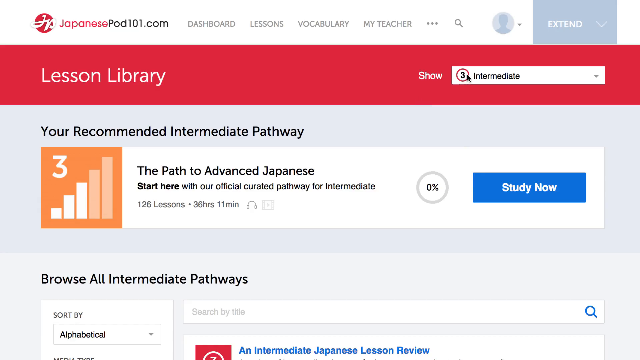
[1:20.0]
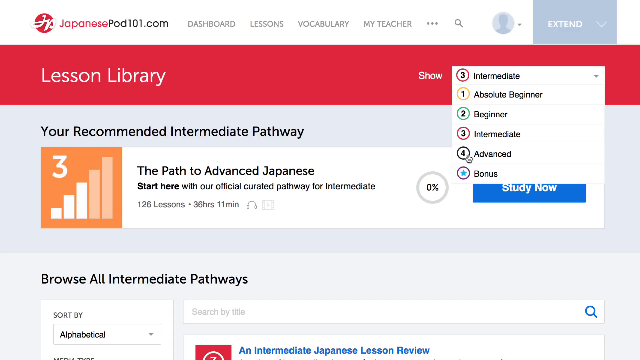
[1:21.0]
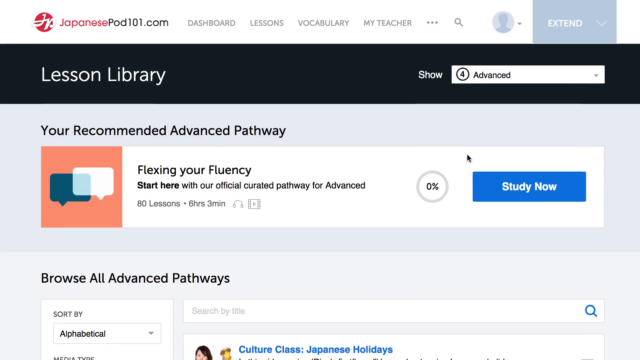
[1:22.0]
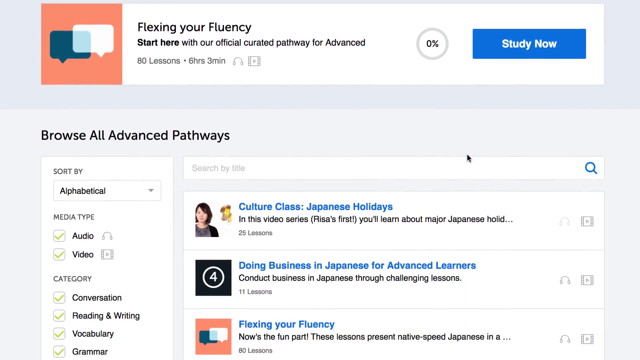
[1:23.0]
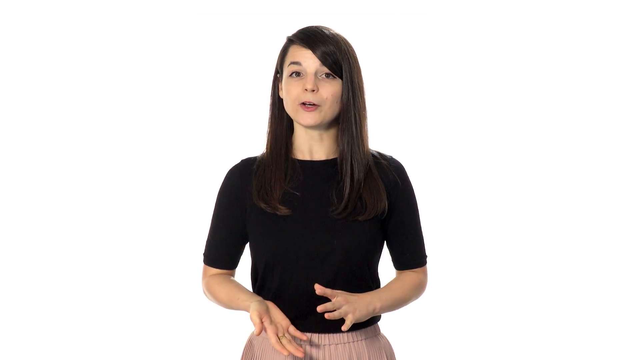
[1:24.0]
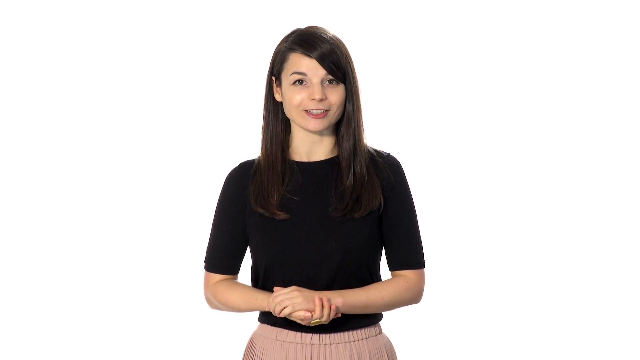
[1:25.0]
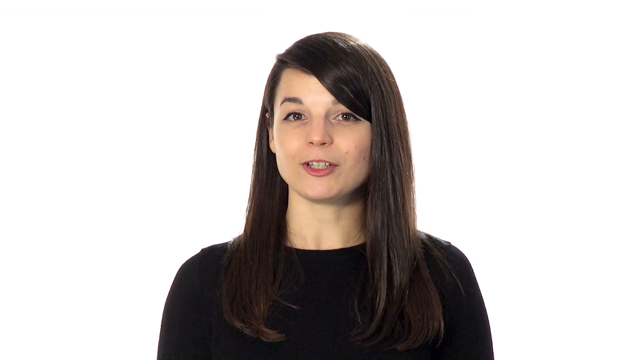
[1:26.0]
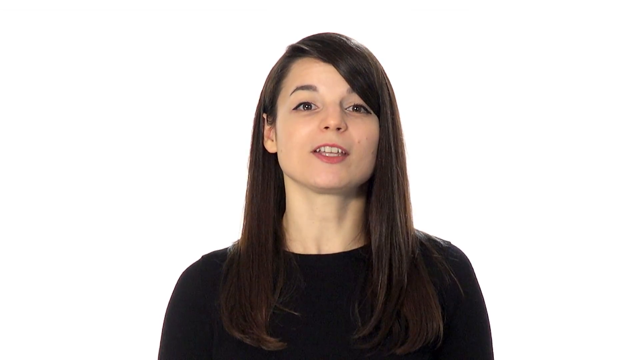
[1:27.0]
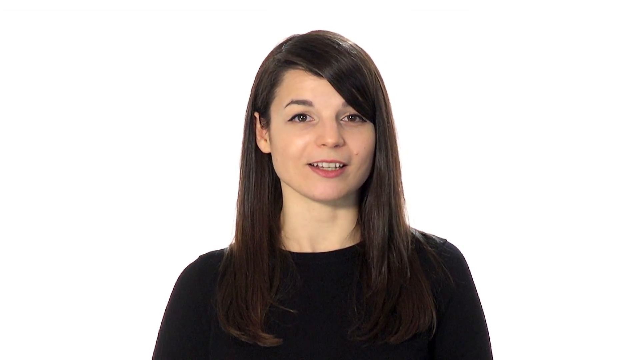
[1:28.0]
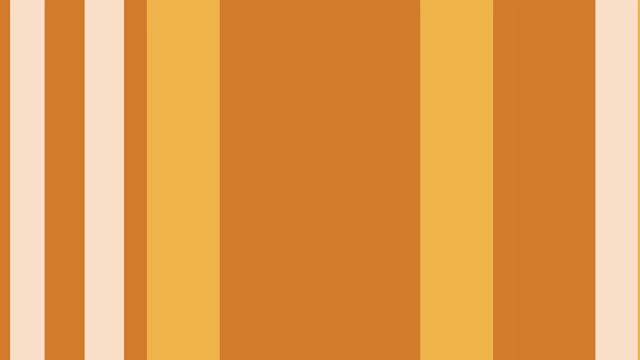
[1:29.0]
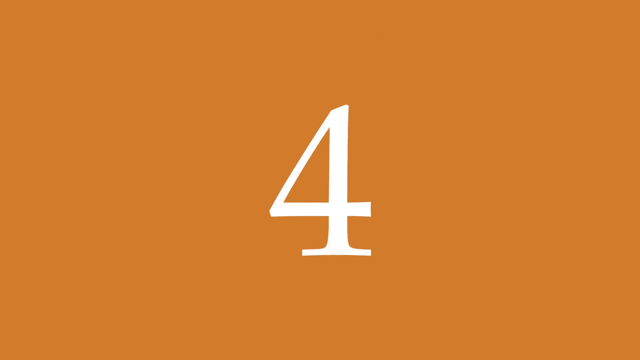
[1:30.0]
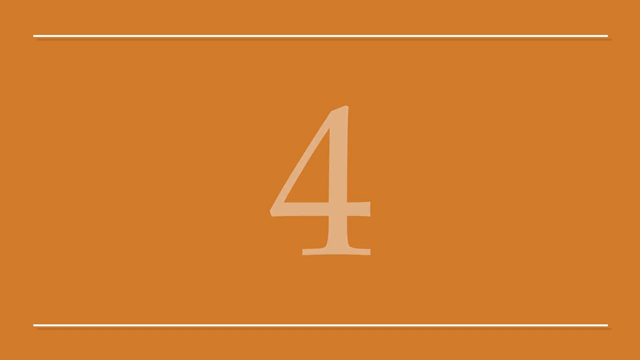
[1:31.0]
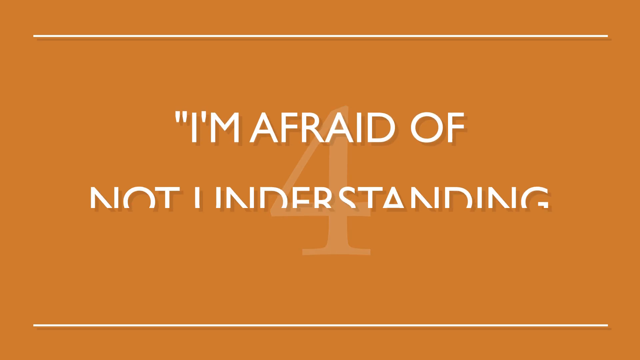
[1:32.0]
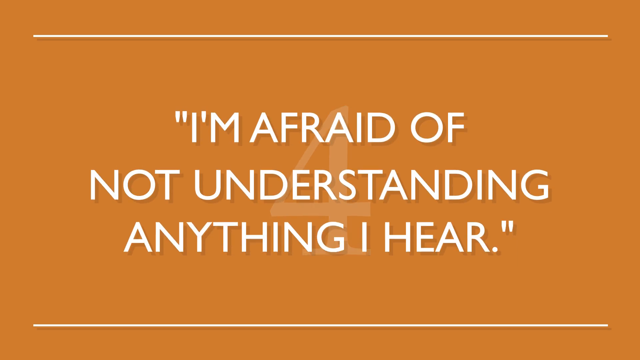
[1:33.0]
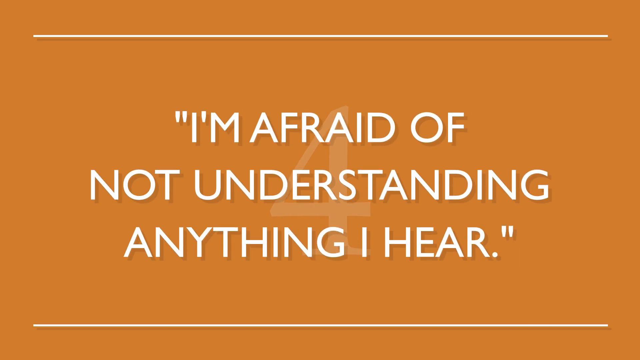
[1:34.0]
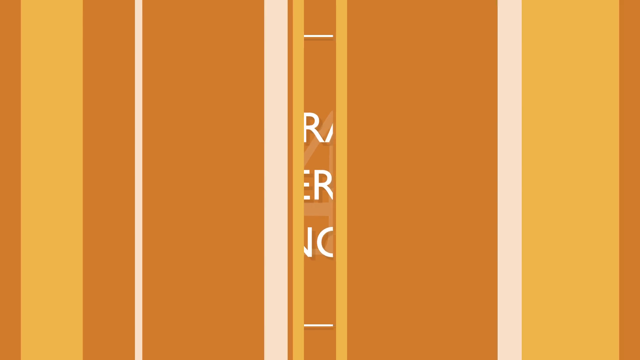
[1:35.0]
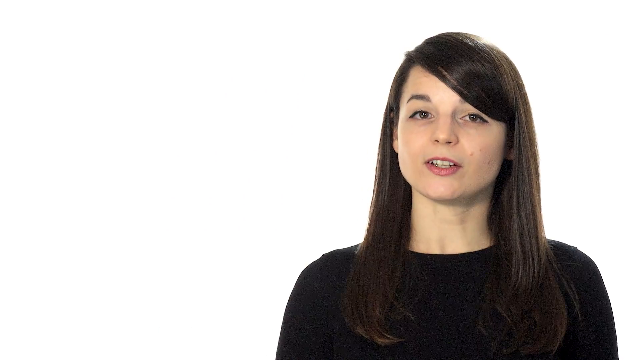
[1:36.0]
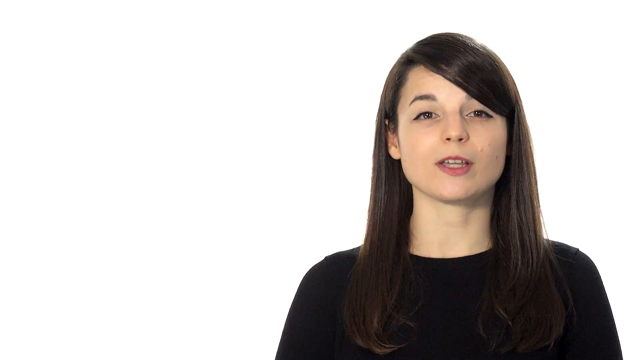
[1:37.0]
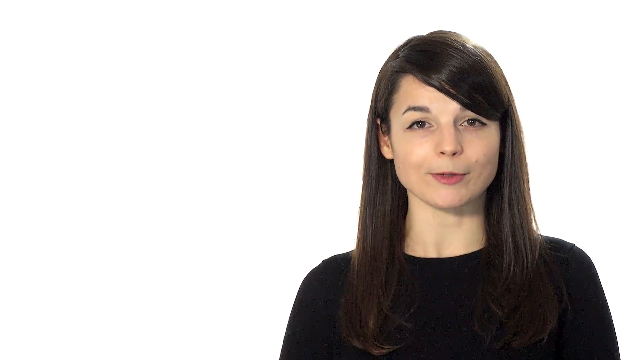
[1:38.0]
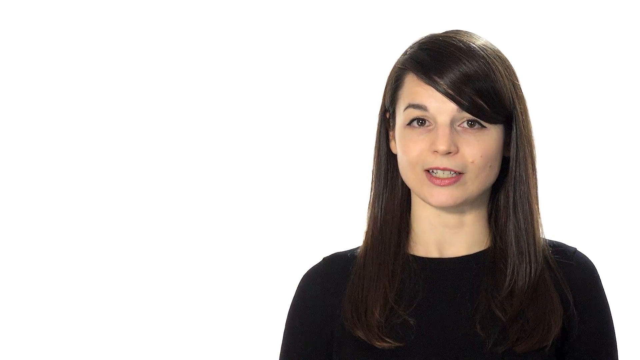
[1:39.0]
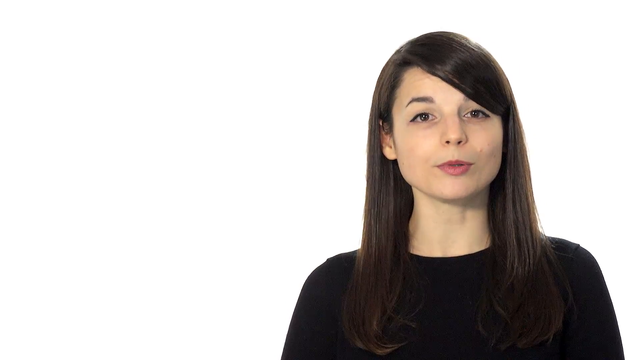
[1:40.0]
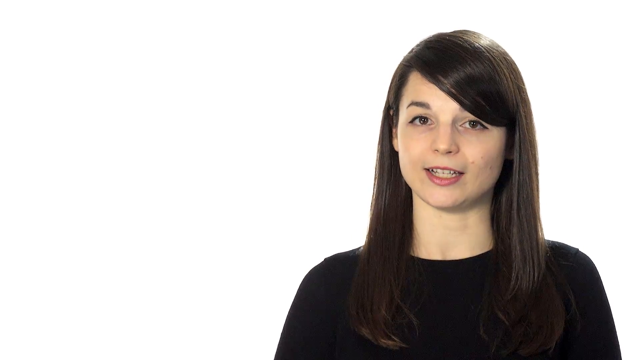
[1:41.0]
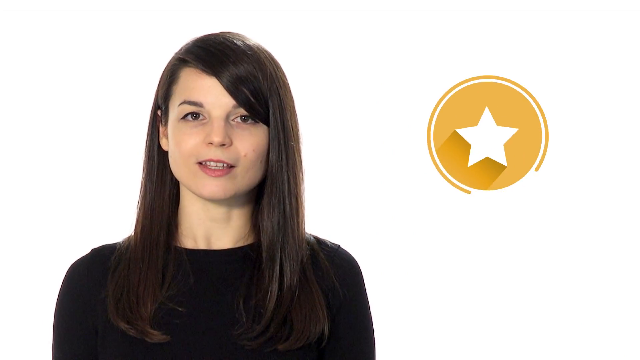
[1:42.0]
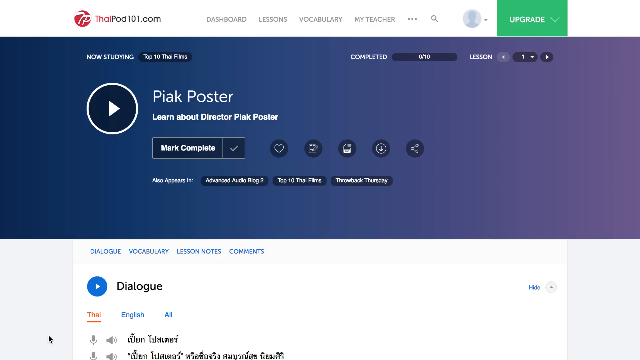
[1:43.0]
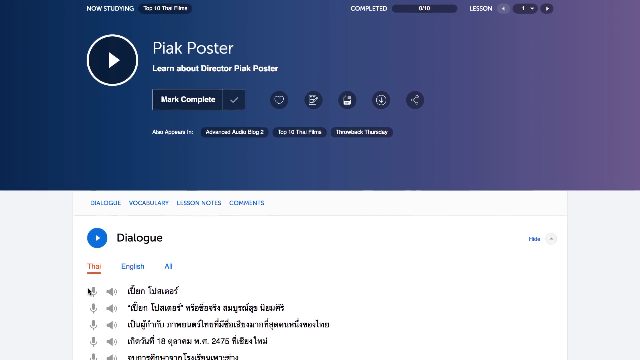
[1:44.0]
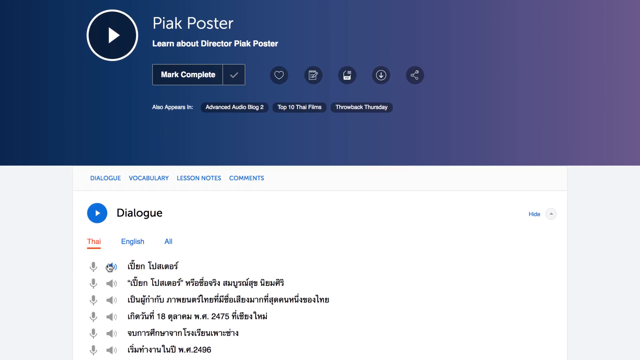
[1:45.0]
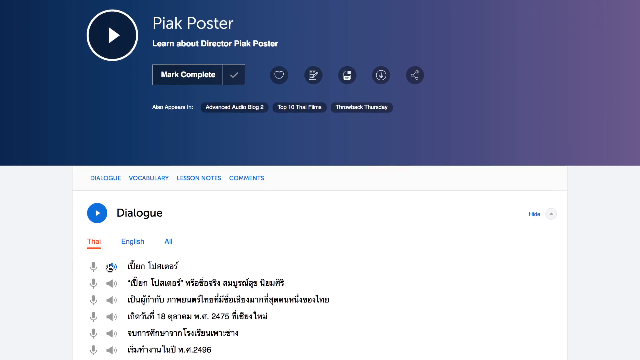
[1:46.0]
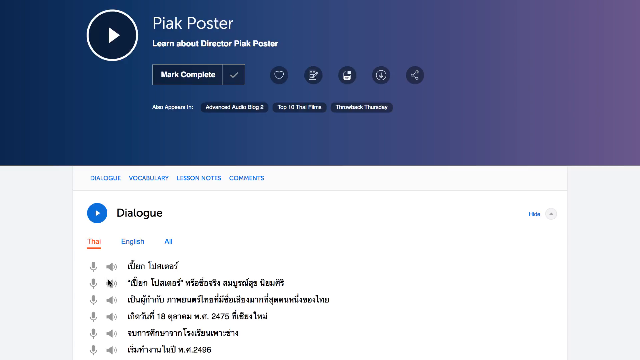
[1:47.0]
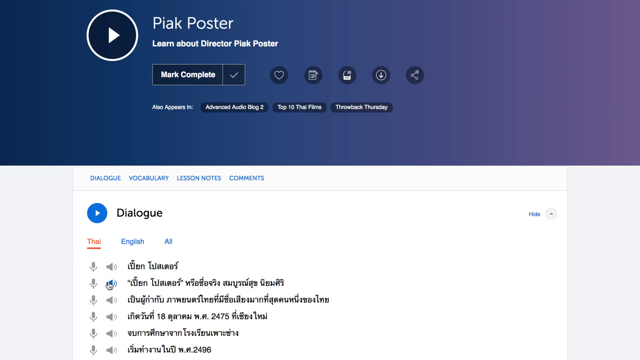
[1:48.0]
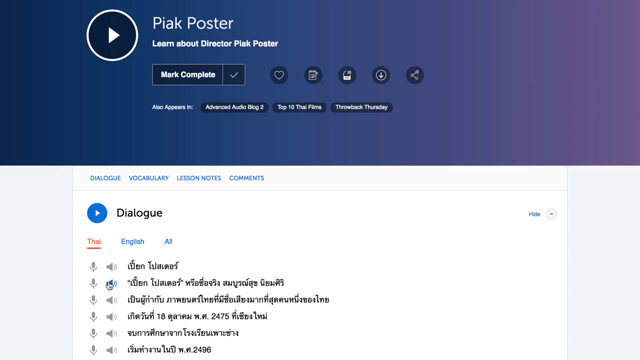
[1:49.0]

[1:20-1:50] A woman is explaining something, apparently about languages, as the title "top four language learning fear according to our users" is written on screen. This continues for a while, then numbered subtopics appear, and number one reads "I'm not good enough at speaking yet." A written solution follows: "the best way to get good at speaking is to start speaking from day one." She elaborates on this for some time. Number two then reads "I am afraid I'll never be fluent," and a possible solution appears that reads "make daily goals like having just a five minutes conversation."